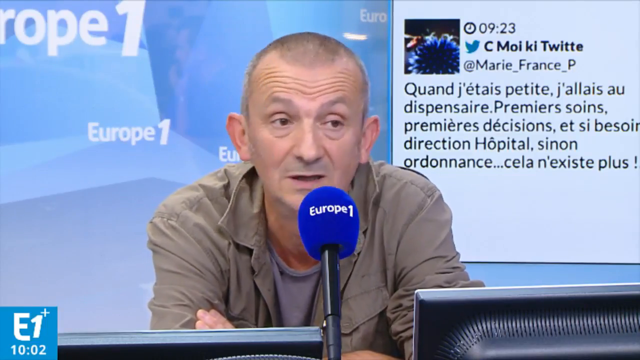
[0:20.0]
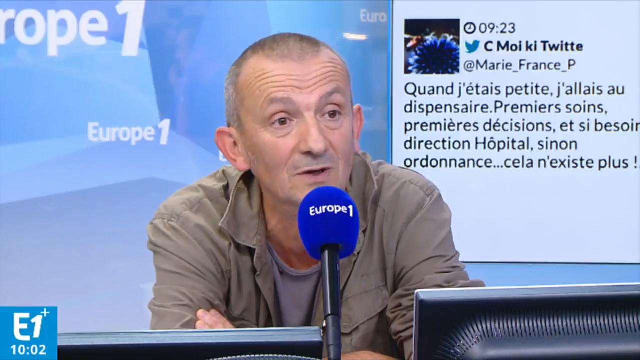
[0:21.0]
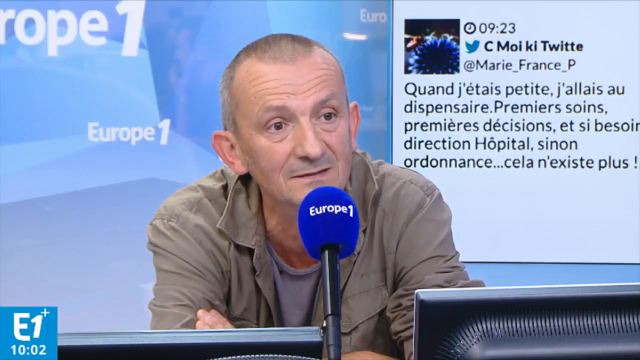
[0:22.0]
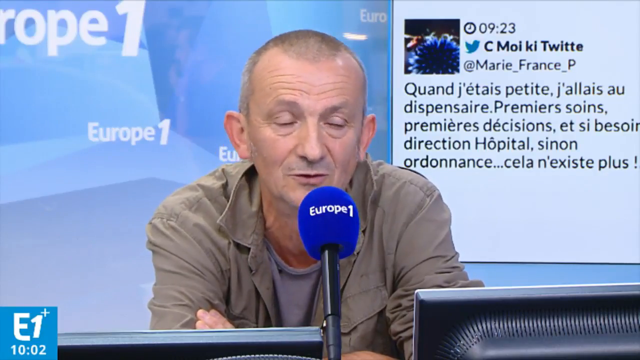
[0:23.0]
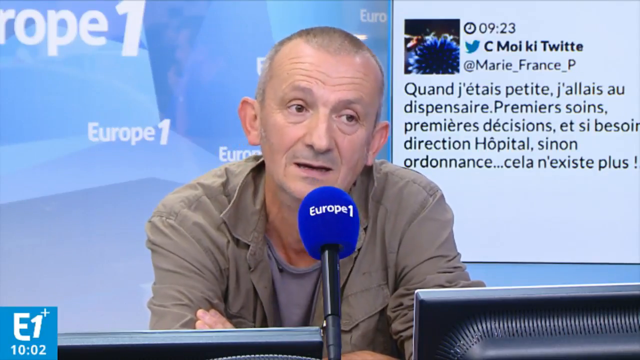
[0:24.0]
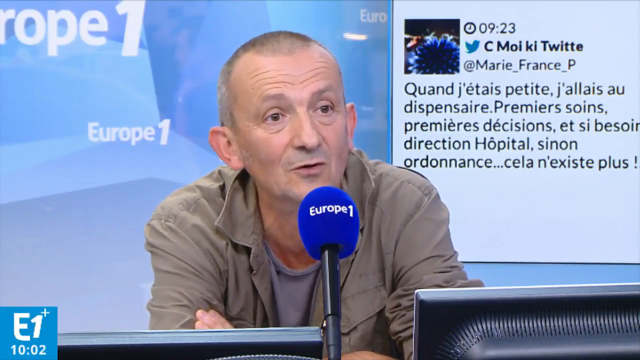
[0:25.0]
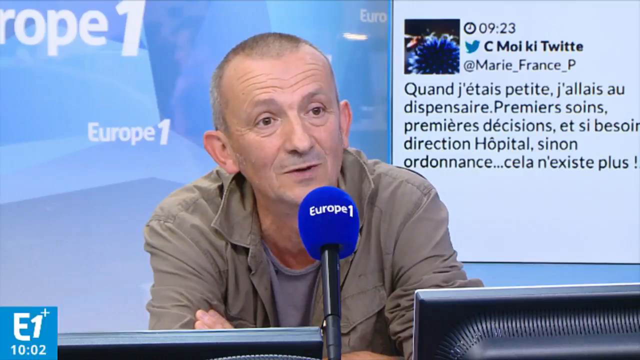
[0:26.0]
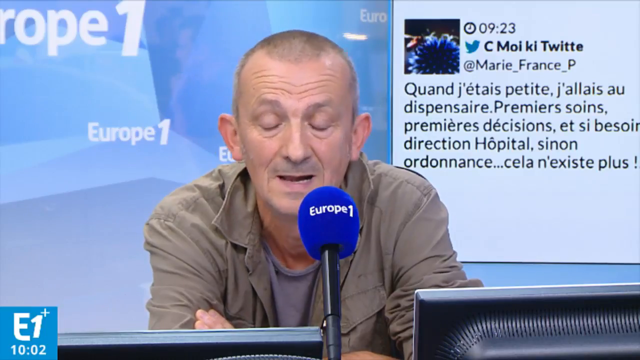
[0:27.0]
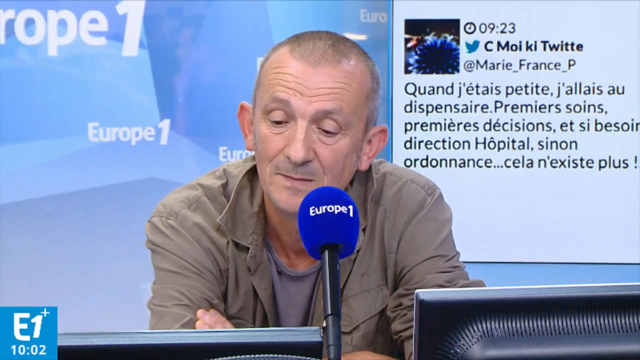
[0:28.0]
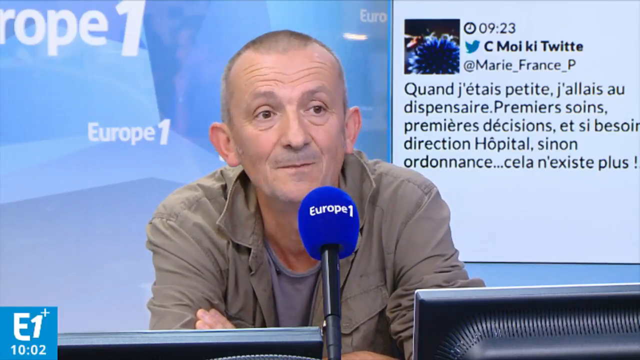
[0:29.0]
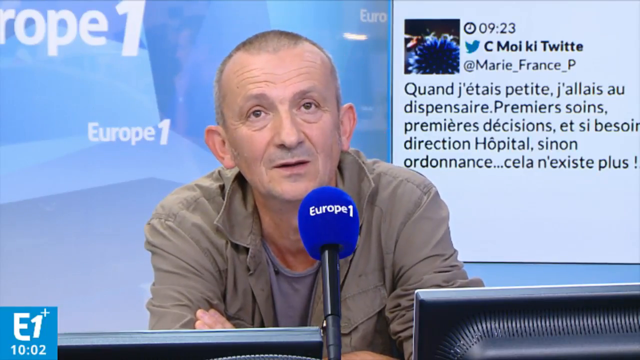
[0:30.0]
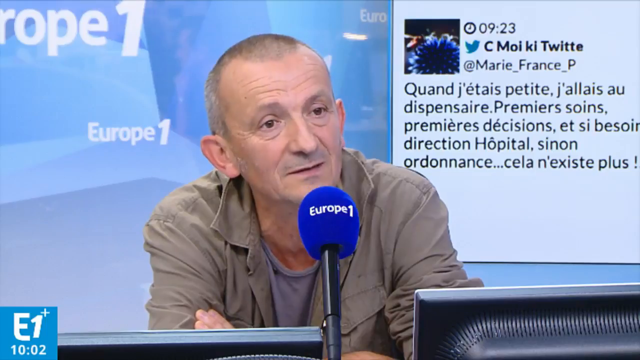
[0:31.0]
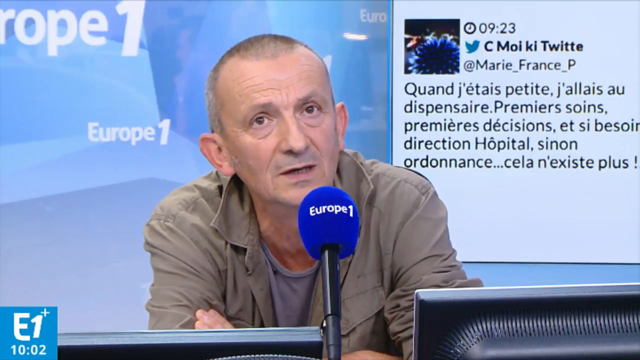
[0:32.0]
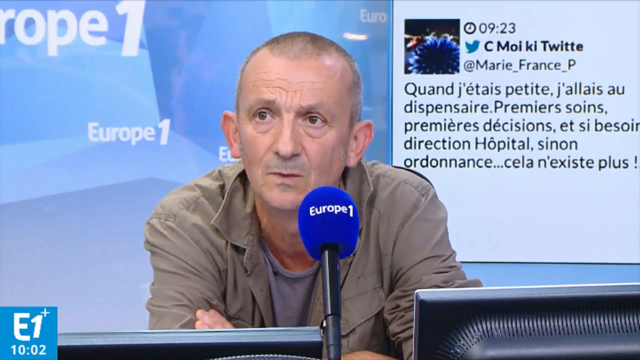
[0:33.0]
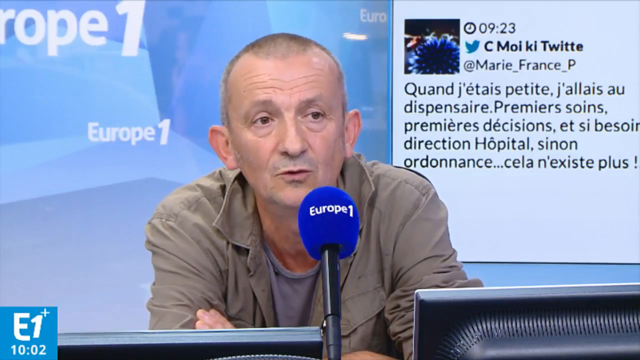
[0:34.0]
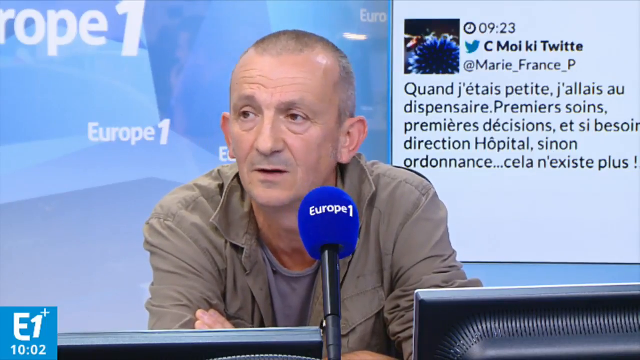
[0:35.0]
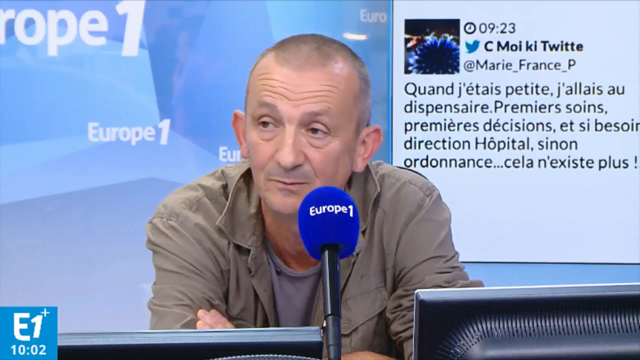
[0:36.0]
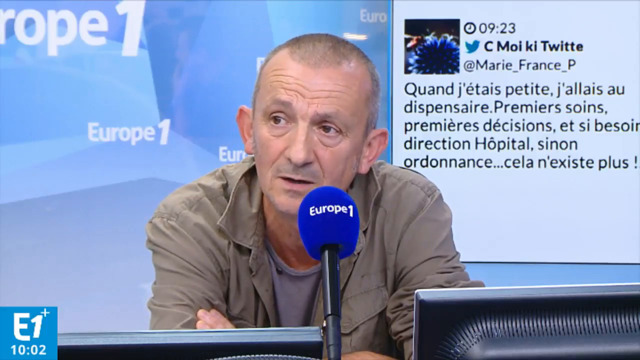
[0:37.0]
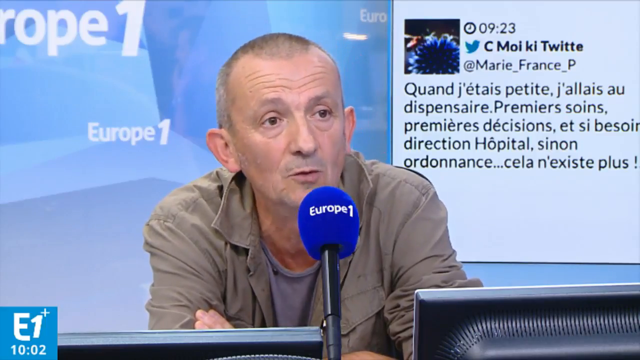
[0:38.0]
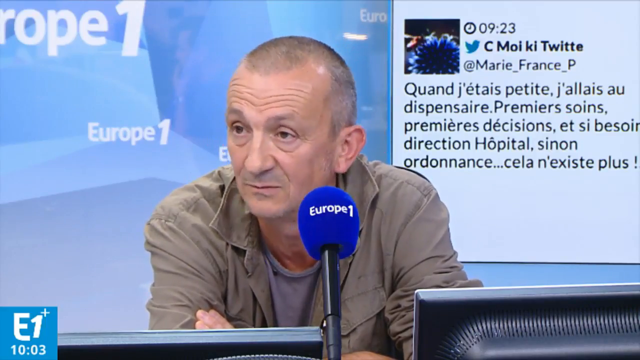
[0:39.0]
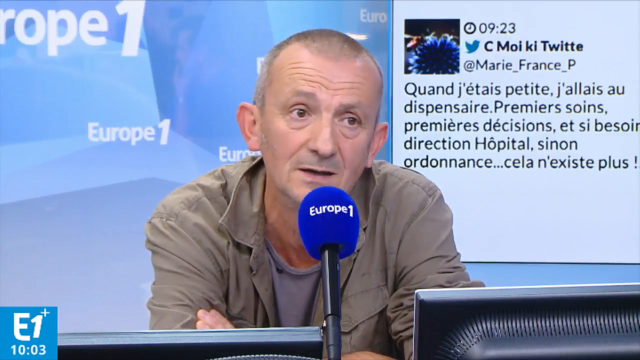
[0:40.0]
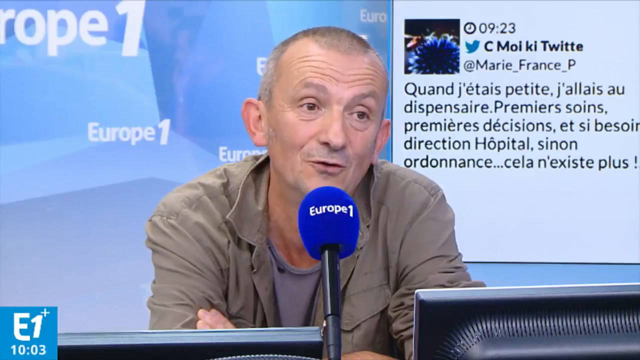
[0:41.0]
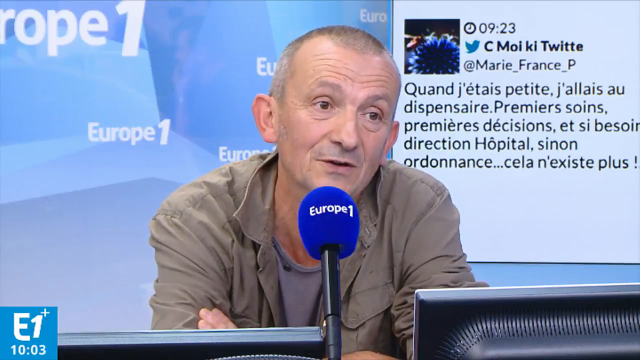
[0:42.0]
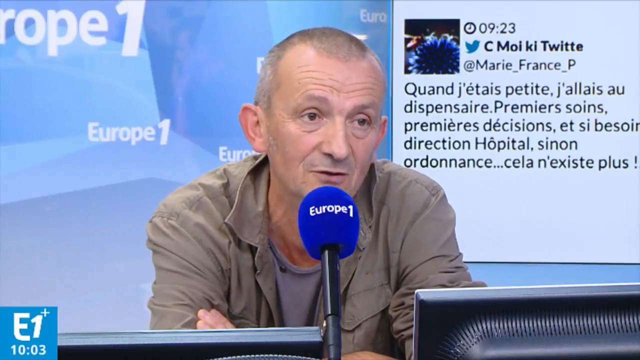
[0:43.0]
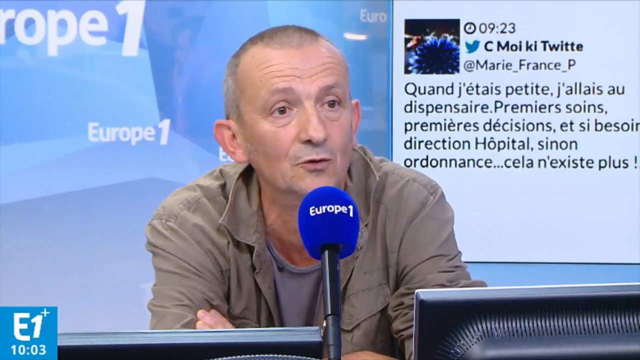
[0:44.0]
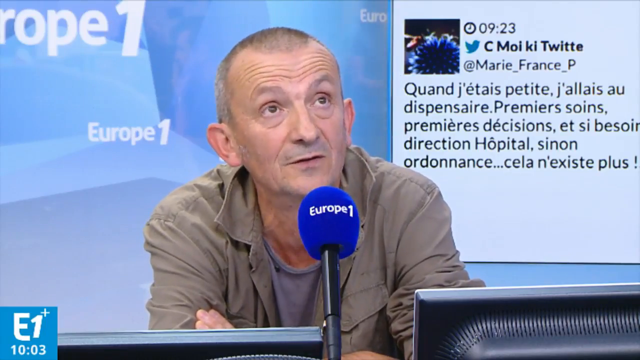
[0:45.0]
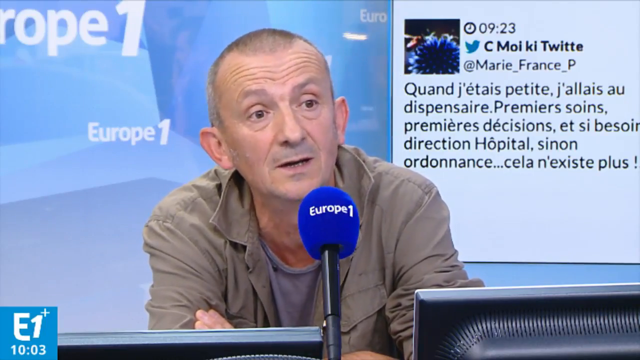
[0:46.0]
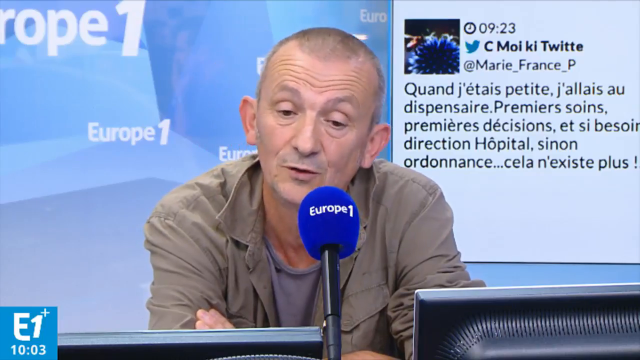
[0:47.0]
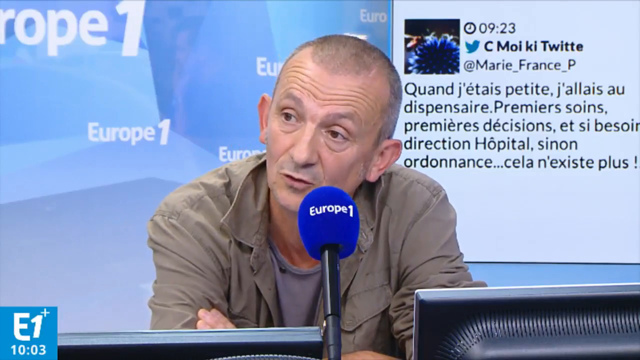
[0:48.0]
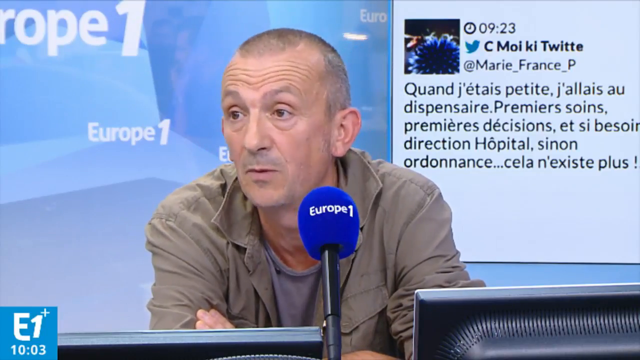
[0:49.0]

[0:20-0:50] The man in his late 60s keeps talking, seemingly about something serious. In the TV behind him, the reflection of someone walking is visible. One side of the TV screen shows text in an unreadable language and the time, 23 past nine; the other side, which is sky blue, reads only "Europe one". In the front corner, "E1" and two past ten are shown. He is not reading news; he seems to be being interviewed or interviewing someone. He is a white man wearing an unbuttoned khaki shirt over a t-shirt. He is quite old but handsome.